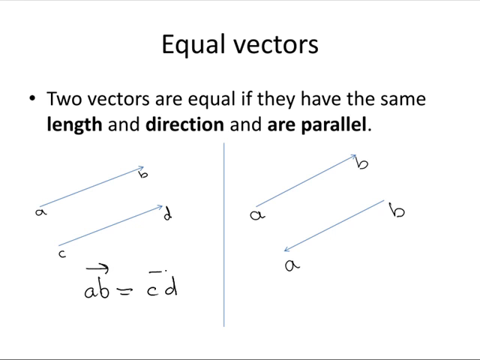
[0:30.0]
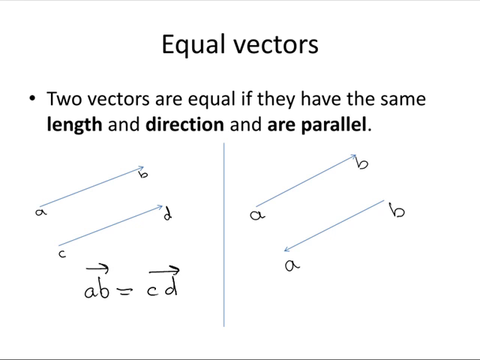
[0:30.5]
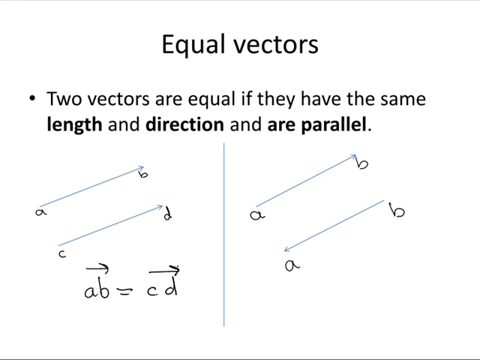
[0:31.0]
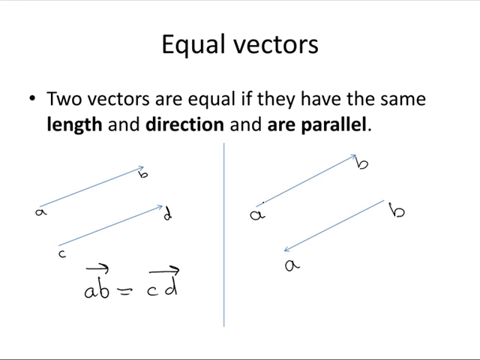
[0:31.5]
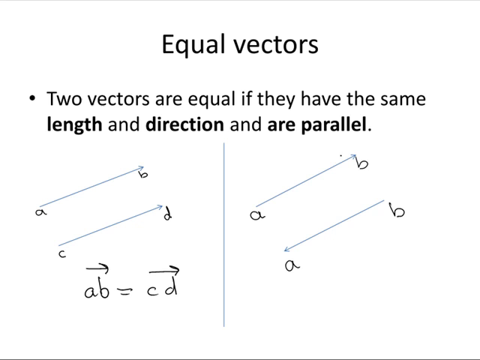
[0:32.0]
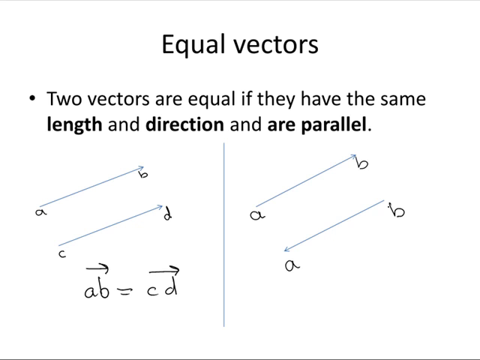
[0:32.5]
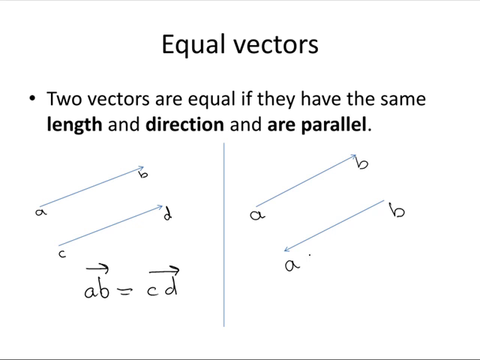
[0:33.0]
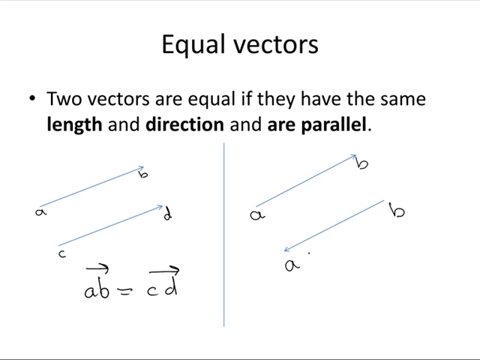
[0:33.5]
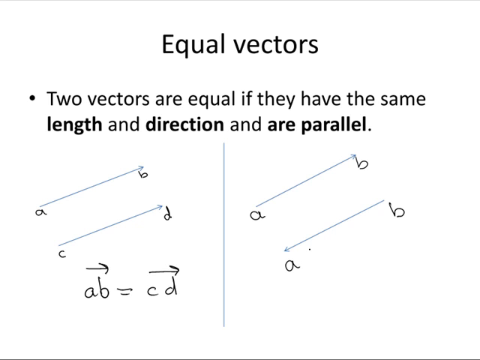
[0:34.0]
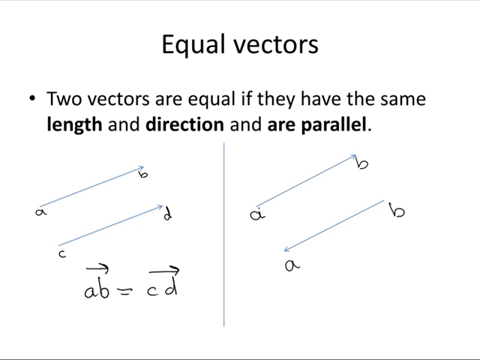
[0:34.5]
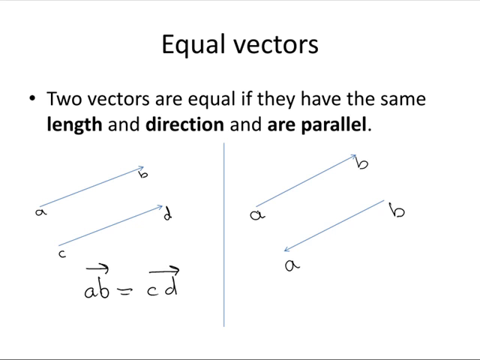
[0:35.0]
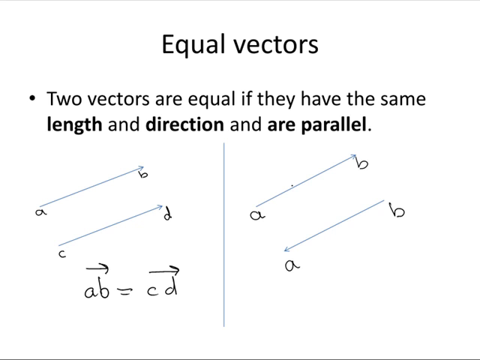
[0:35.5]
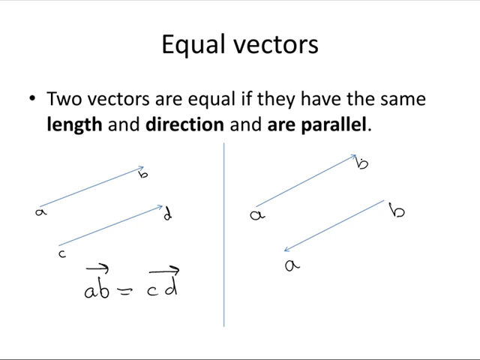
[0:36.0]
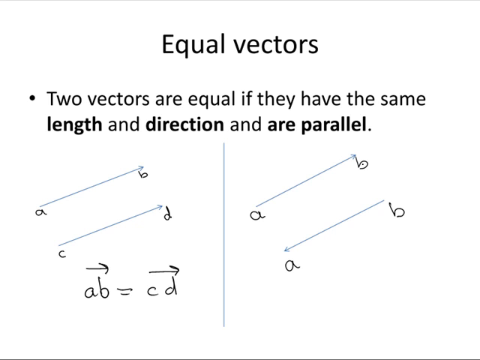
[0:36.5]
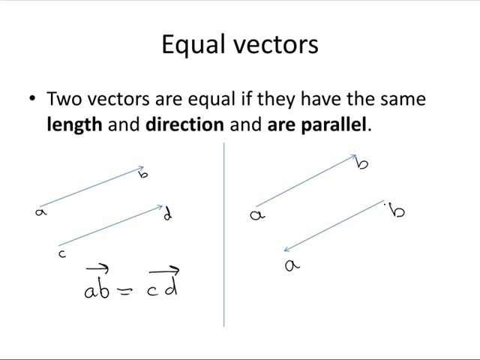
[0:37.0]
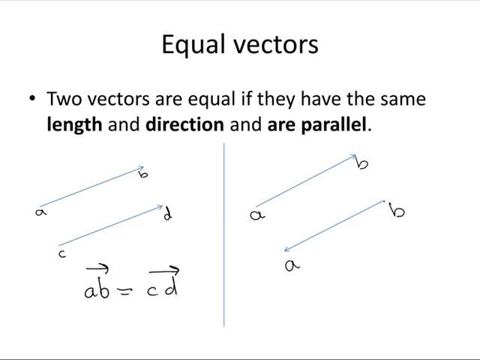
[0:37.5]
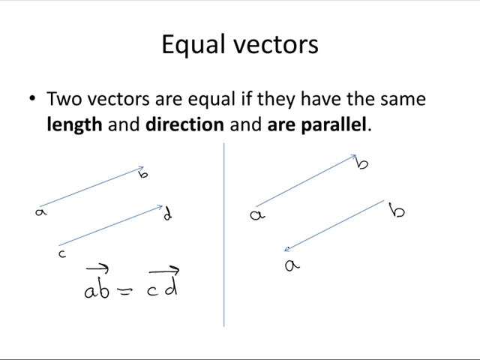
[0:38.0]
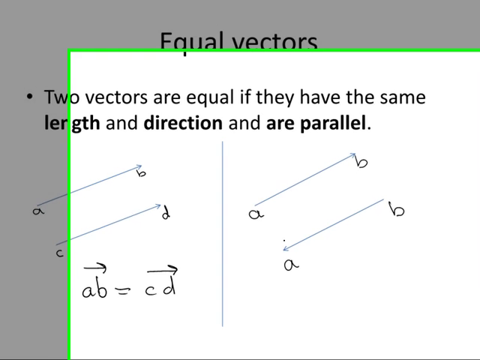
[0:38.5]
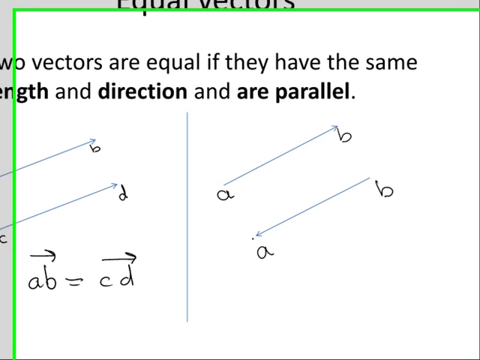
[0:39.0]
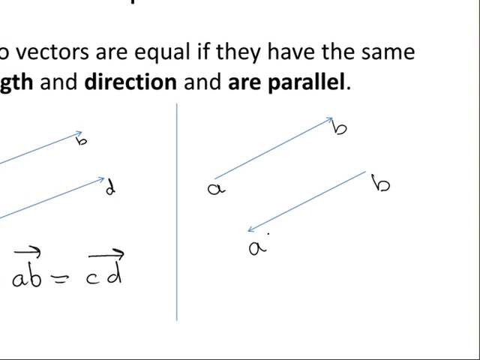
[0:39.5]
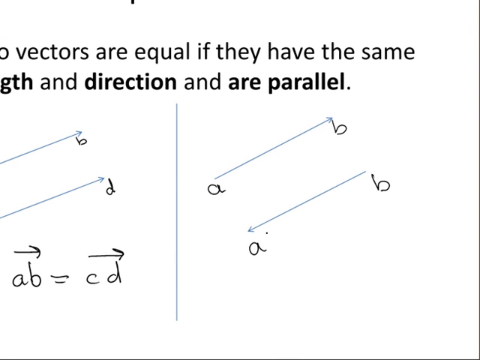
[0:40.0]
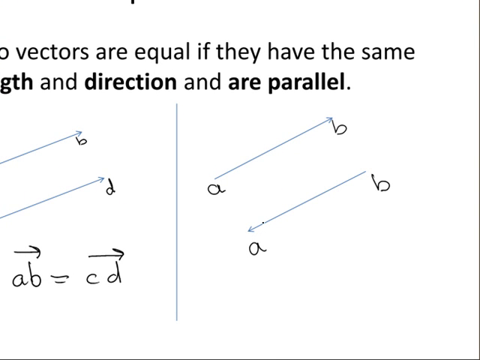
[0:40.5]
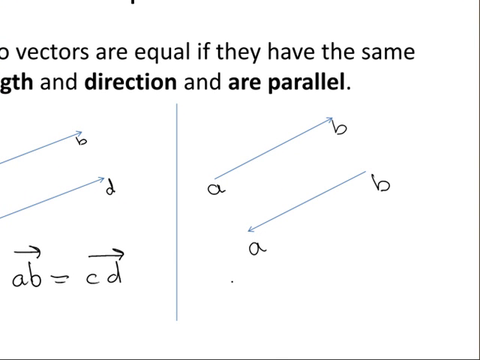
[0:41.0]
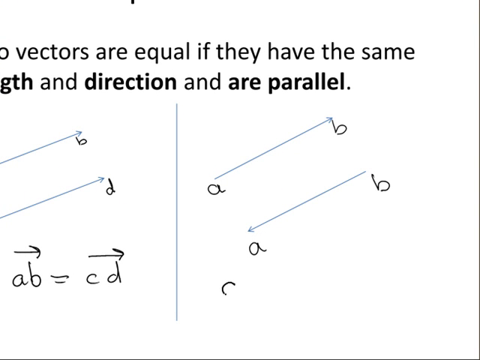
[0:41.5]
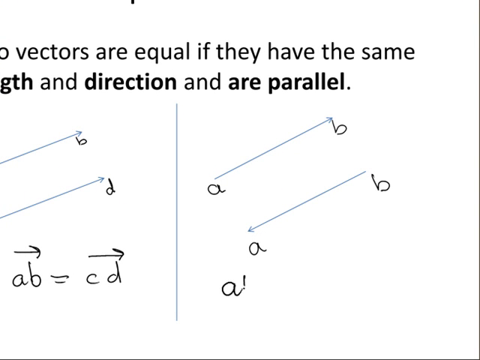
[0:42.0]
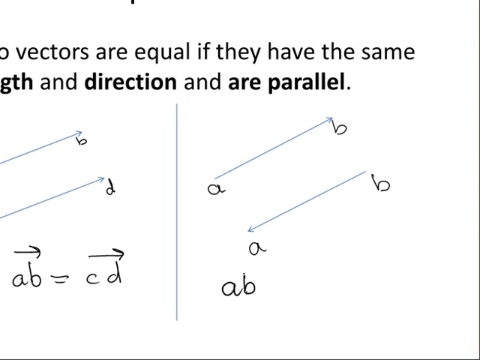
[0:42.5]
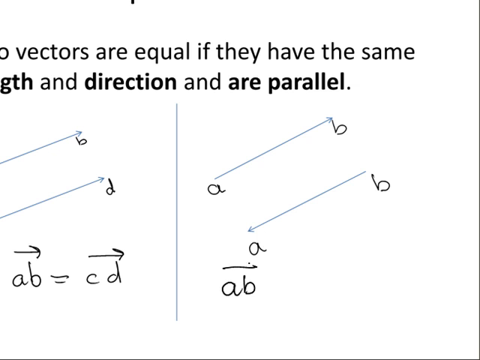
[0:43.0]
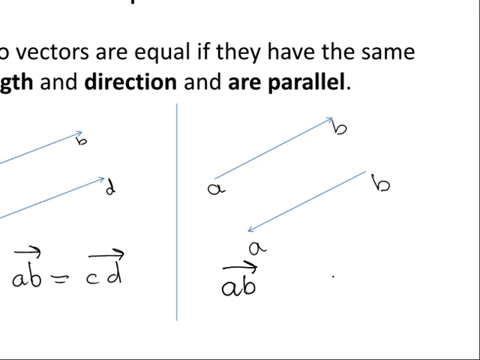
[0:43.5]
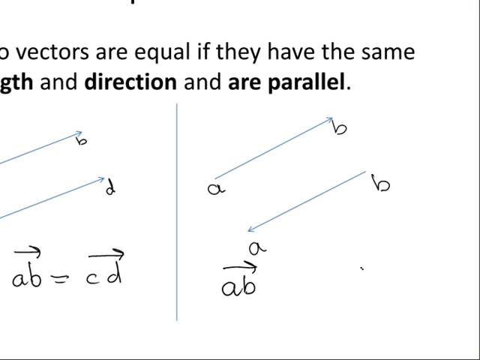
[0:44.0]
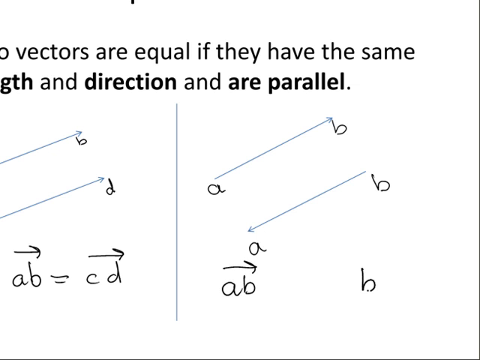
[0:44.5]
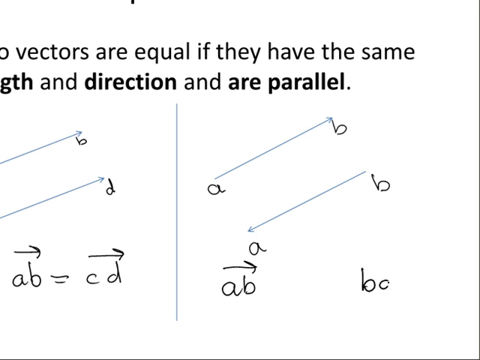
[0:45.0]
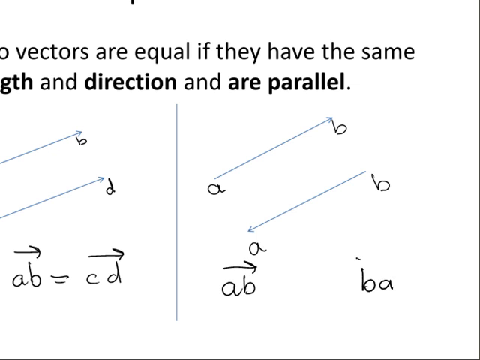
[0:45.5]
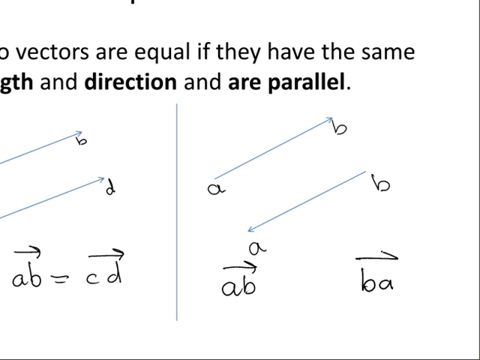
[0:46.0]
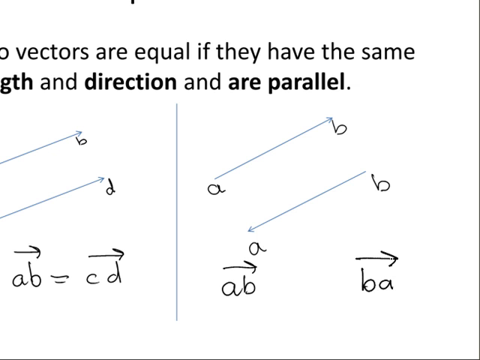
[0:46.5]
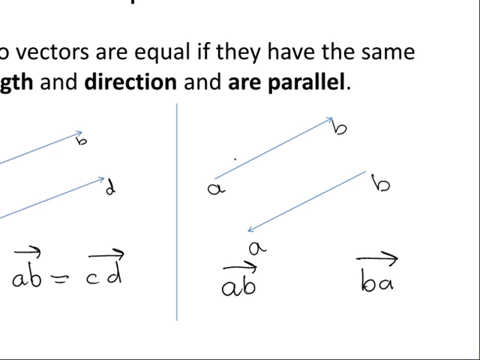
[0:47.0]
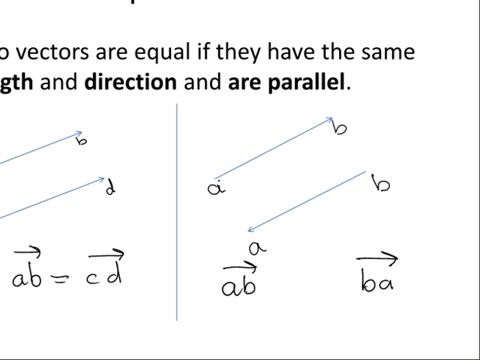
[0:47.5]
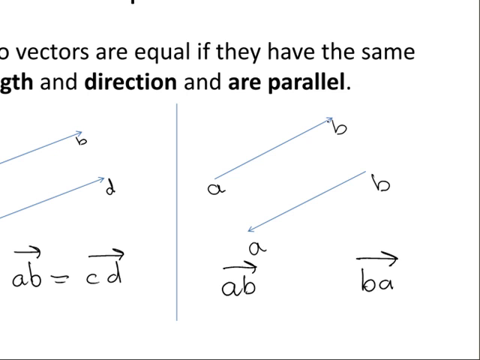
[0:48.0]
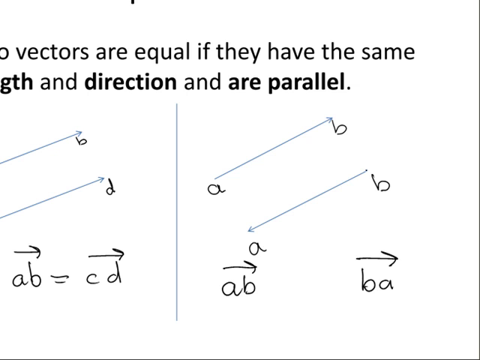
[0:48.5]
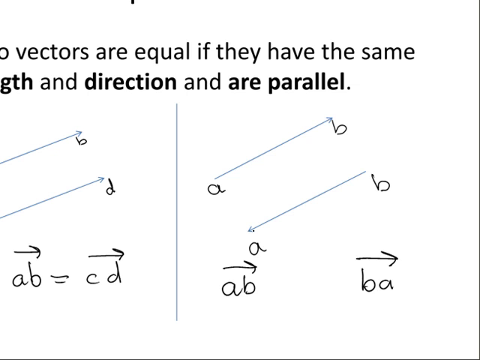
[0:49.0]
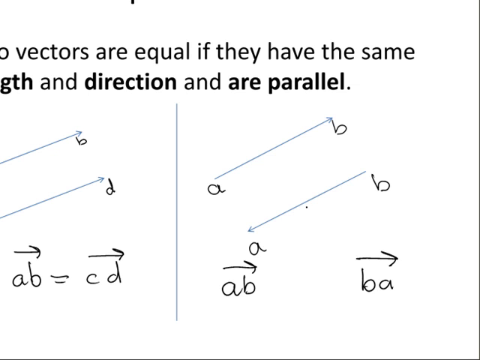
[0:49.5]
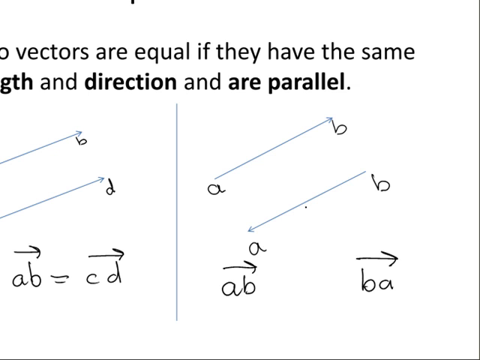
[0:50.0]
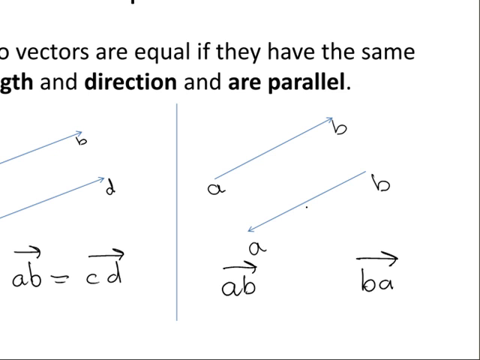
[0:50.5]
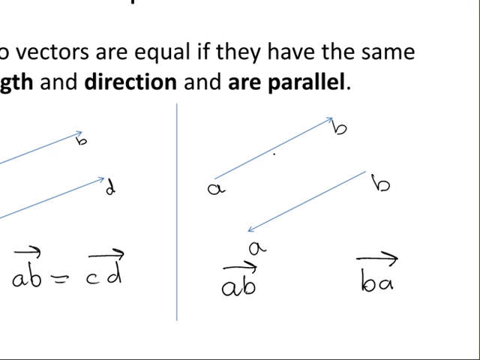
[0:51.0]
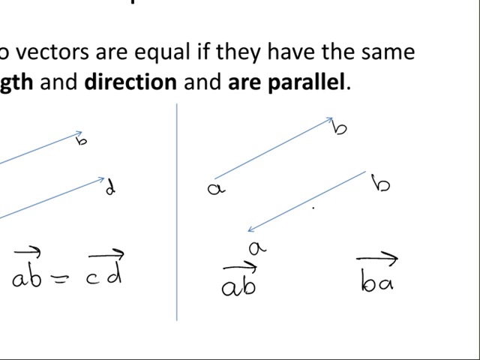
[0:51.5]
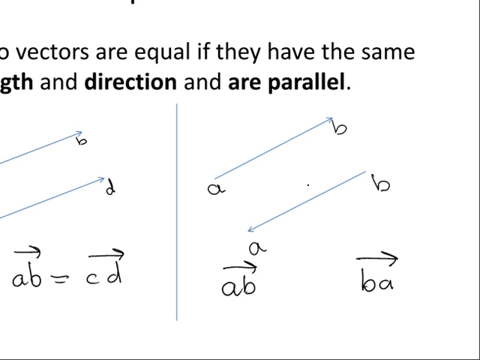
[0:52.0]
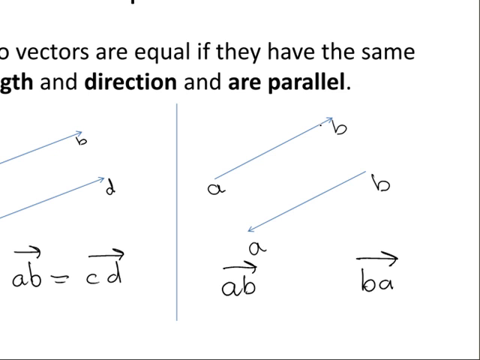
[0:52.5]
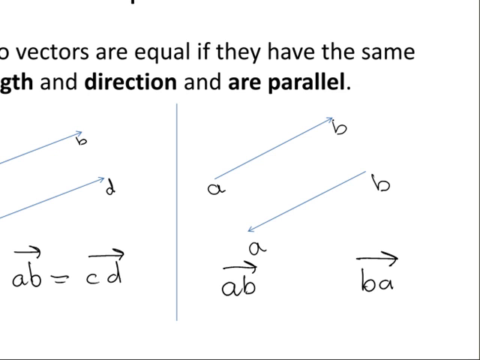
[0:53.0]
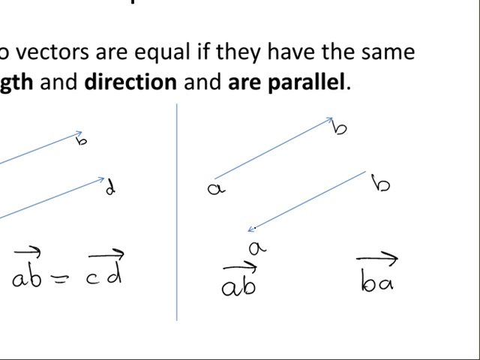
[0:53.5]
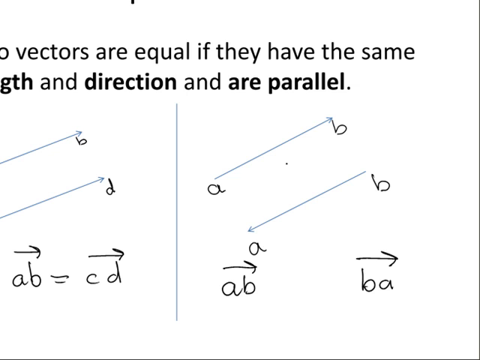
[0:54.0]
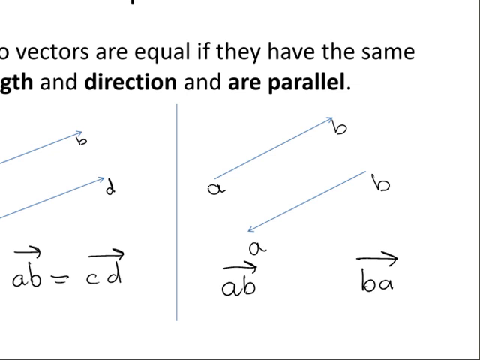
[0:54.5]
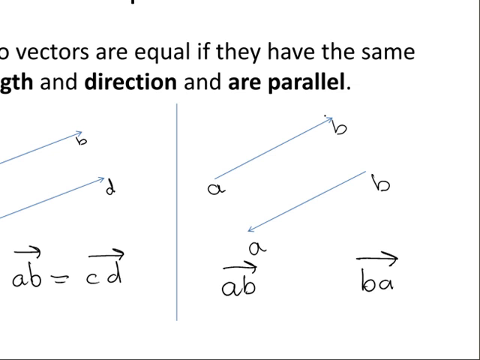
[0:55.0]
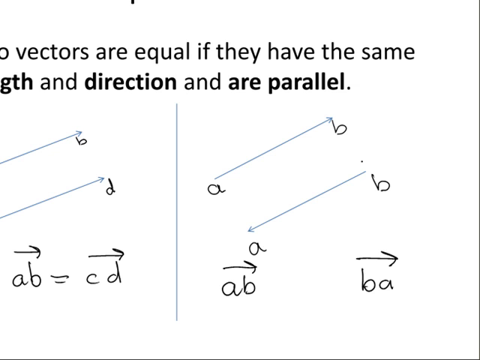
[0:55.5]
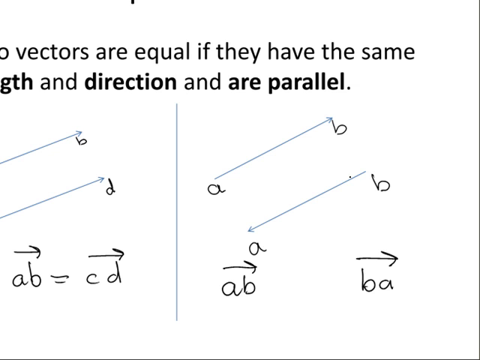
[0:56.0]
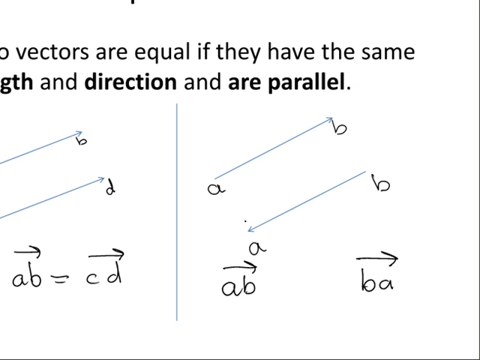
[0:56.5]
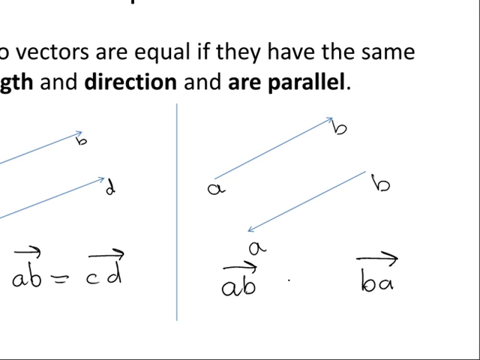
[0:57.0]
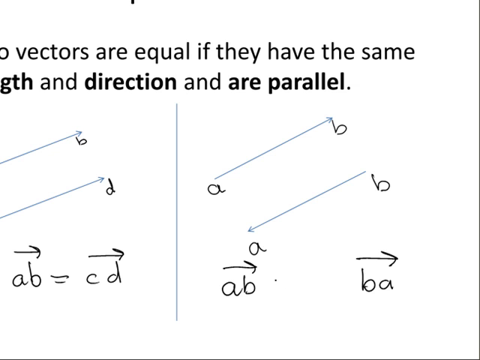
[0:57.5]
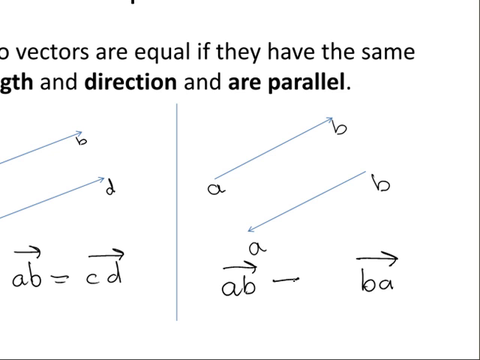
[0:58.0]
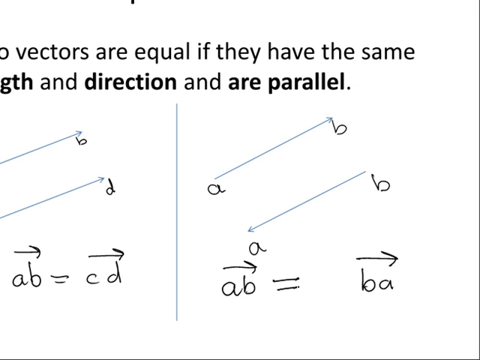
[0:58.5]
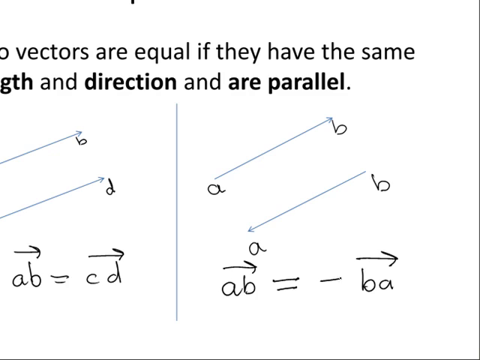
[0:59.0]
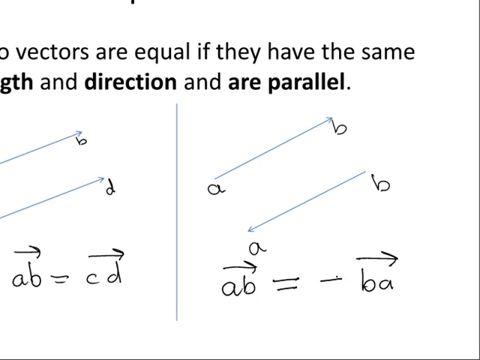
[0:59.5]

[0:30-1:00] The white slide shows the heading "equal vectors" in large black text, with one bullet point beneath it saying "two vectors are equal if they have the same length and direction and are parallel"; "length," "direction," and "are parallel" are bold. A vertical line runs down the page, with a set of parallel lines on each side. On the left, the top line is labelled A, B and the line beneath it C and D; both start lower on the left and incline higher to the right, with arrowheads pointing to the right. On the right, a pair of parallel lines are both labelled A, B at the ends; the top line has an arrow pointing up and to the right, and the bottom line has an arrow pointing to the left and downwards. Beneath the parallel lines on the left panel, text written in what looks like black marker says "AB equals CD," with a black right-pointing arrow over AB and another over CD. The page then zooms in a bit closer to the right side with the two lines labelled A, B. Black text is written: "AB" with a black right-facing arrow drawn over it, and a little to the right "BA" with a black right-facing arrow over it. The cursor hovers over the parallel lines above the text. Then an equal sign is written after the first AB, followed by a minus sign after the equal sign, before the BA.